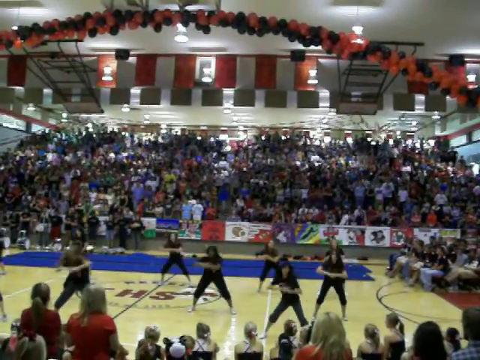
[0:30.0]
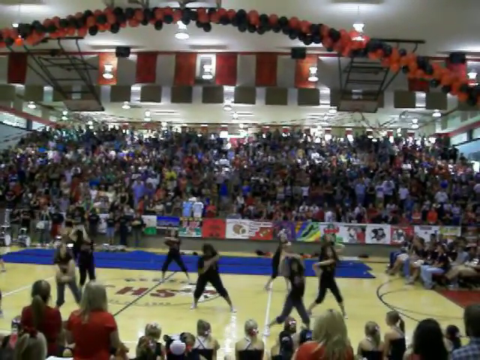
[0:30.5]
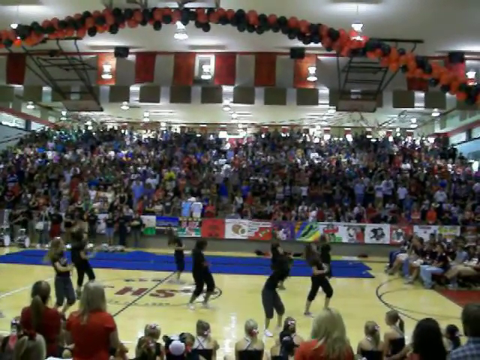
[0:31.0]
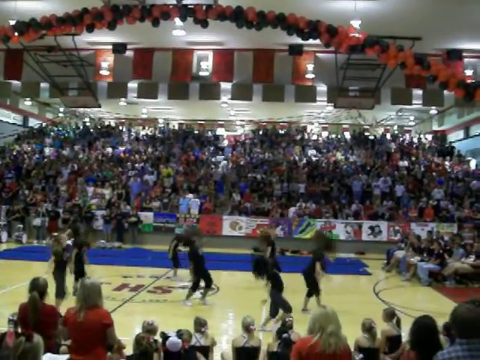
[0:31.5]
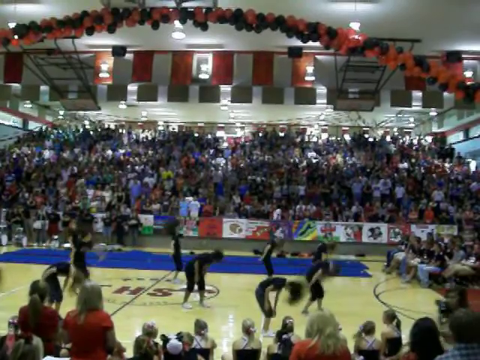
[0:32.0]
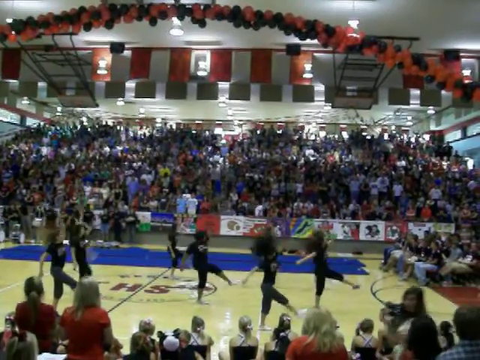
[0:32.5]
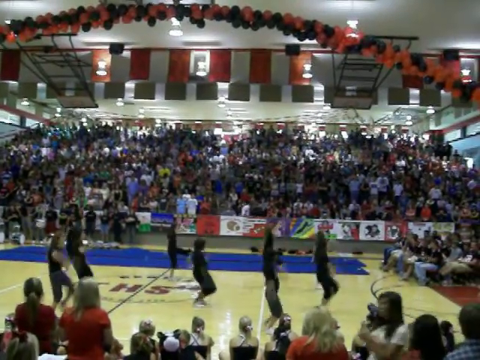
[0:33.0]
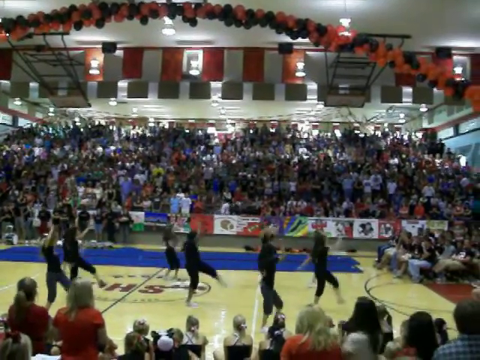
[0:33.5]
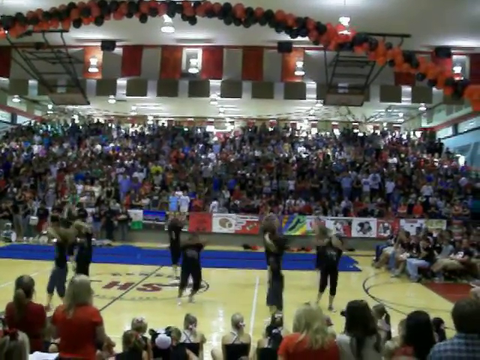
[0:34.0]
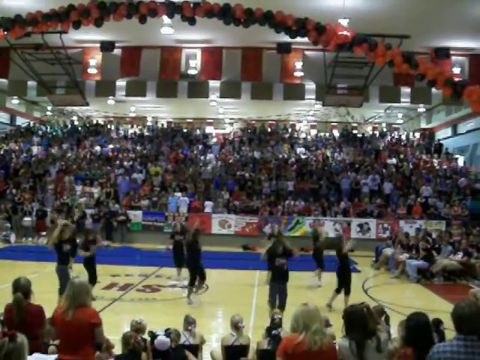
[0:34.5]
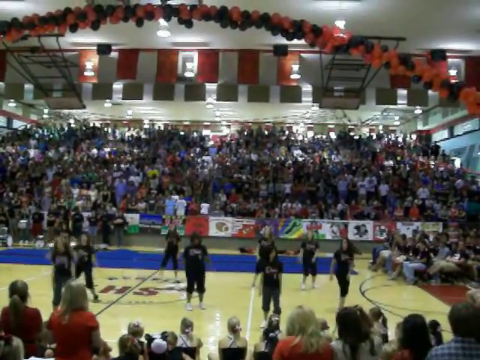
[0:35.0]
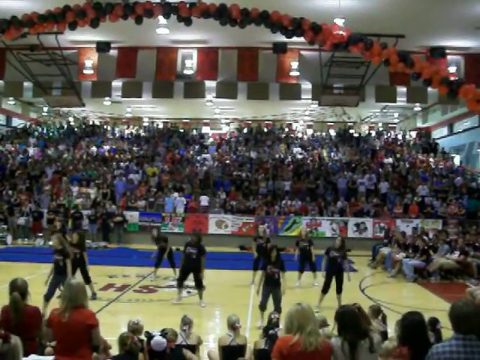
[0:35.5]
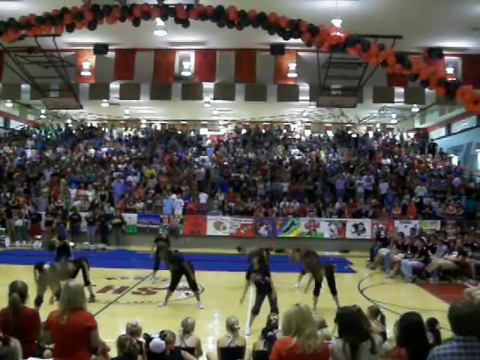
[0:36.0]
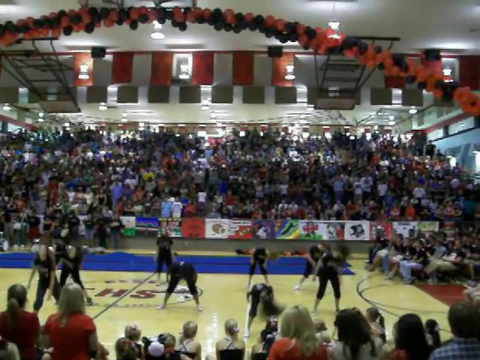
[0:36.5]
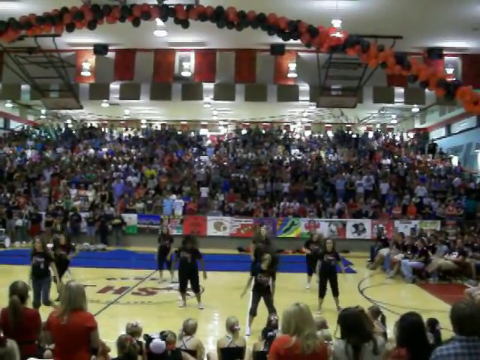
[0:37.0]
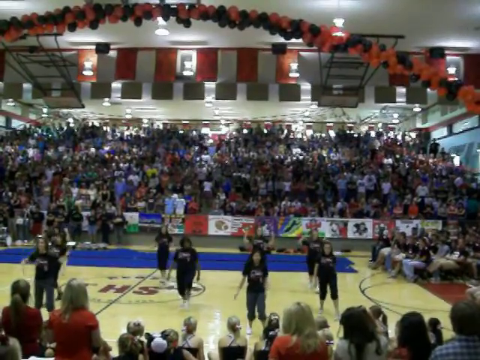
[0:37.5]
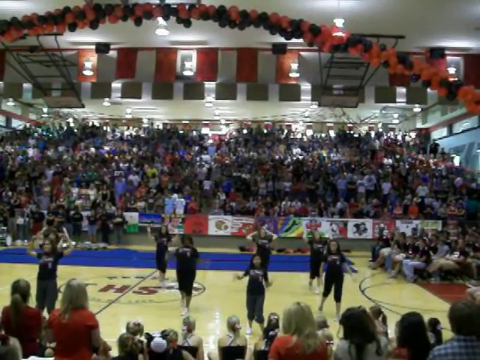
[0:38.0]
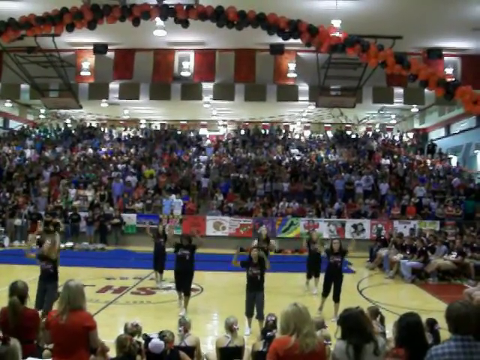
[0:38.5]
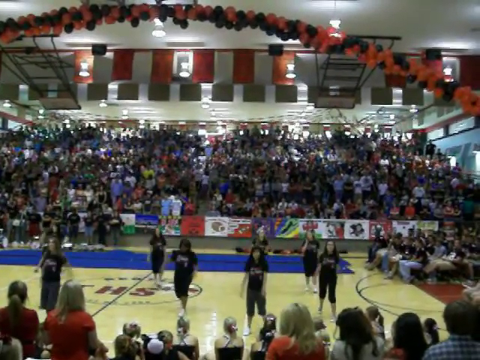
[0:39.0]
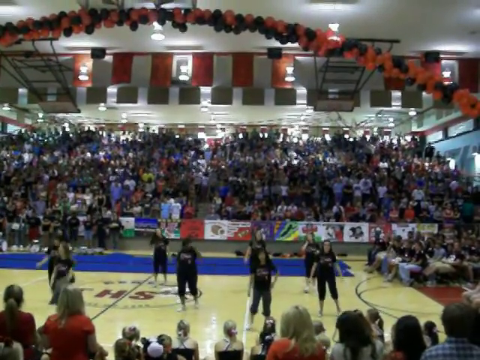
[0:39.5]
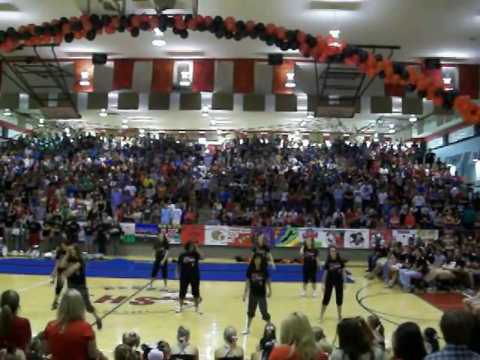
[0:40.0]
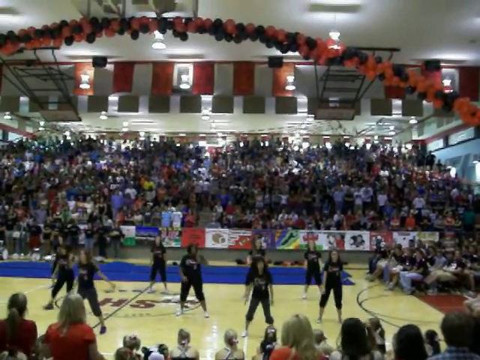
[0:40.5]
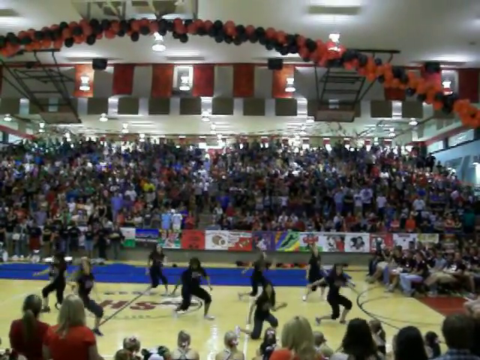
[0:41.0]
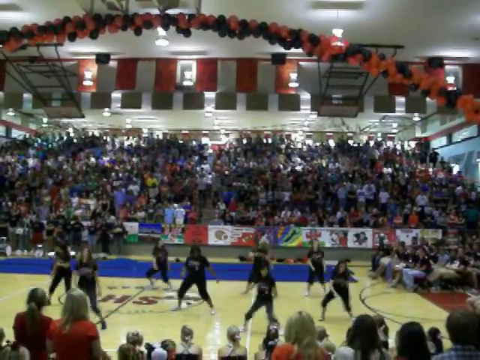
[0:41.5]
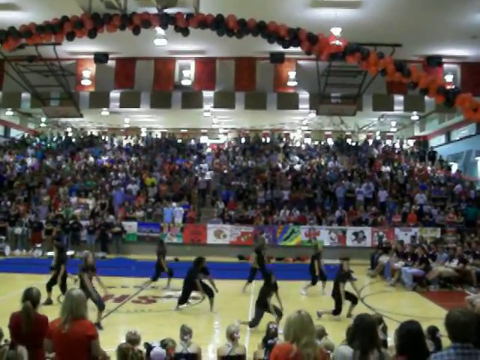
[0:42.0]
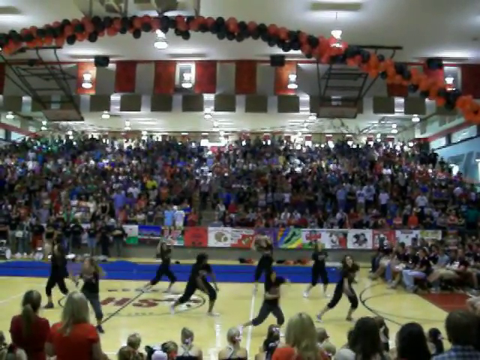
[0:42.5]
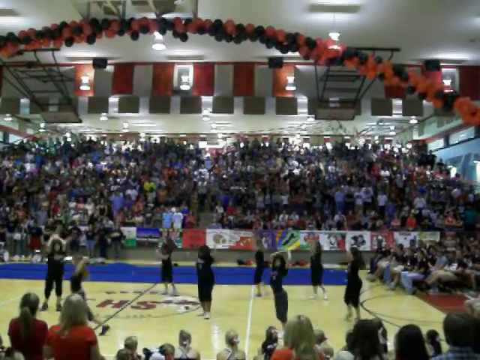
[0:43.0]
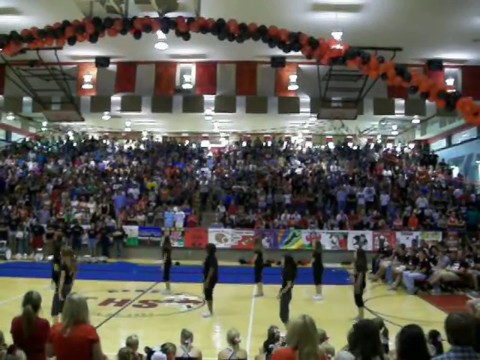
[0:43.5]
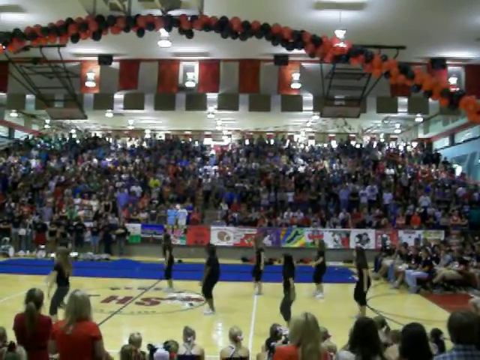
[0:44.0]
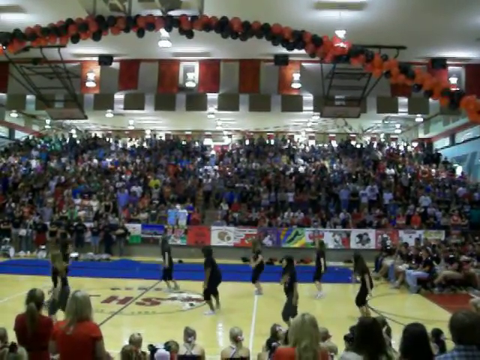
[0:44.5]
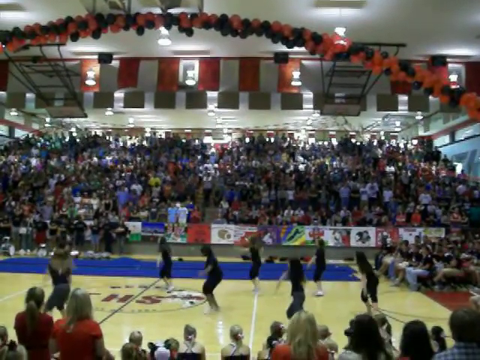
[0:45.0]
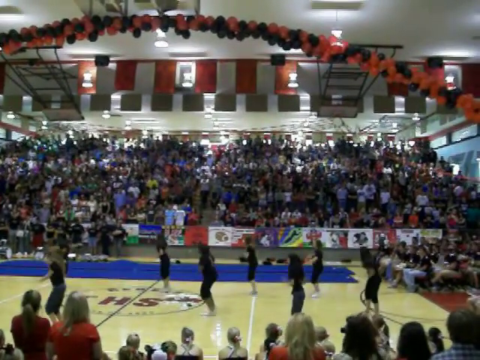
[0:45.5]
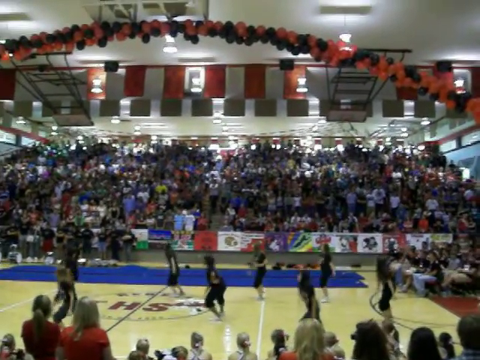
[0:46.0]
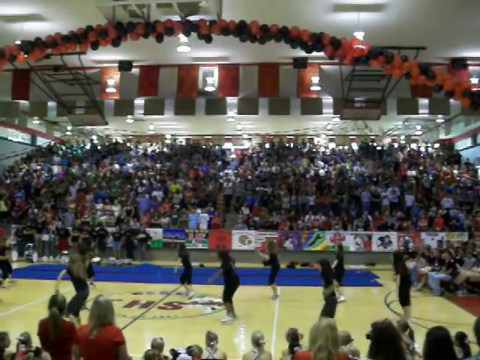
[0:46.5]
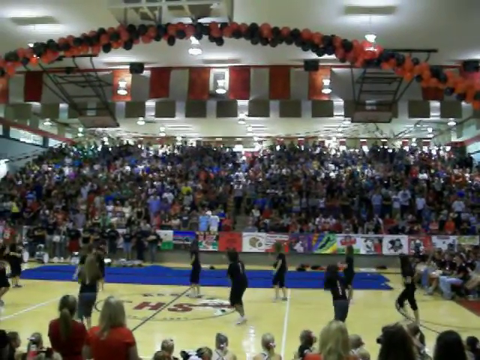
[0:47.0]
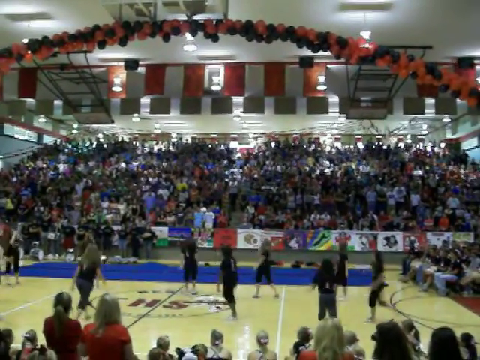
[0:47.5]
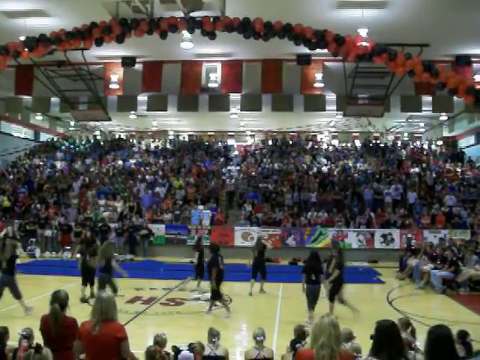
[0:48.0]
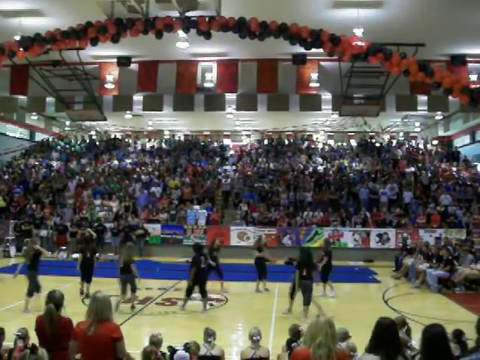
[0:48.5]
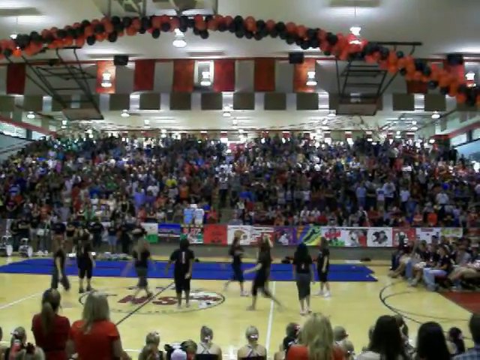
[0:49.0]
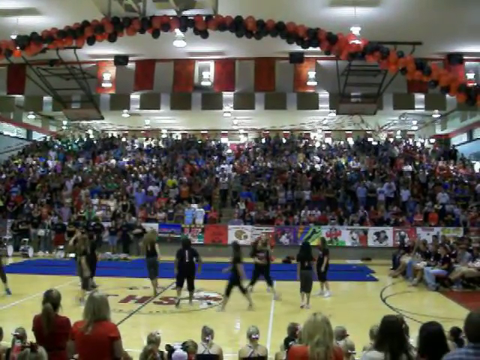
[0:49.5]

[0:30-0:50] What appears to be a cheer squad or dance squad, apparently about 10 women in total, dances on the hardwood of a gym. Their movements are fairly basic, but they dance in unison. An audience watches, probably small, perhaps a few hundred people; the gym is not tiny but is nowhere near stadium size. Orange and black balloons are on the ceiling. A few people sit on the right side; they do not look like they are in uniform, wearing regular dresses or pants, and could be teachers or other students. It may be a pep rally or an assembly.